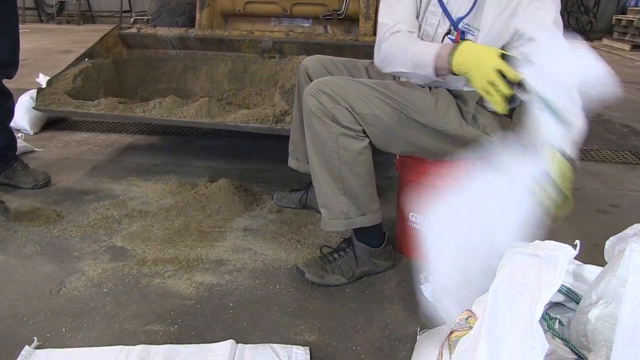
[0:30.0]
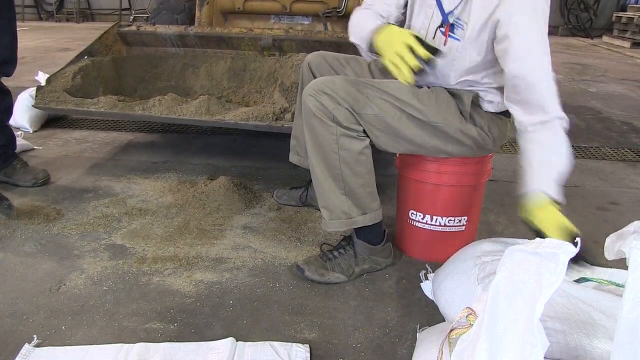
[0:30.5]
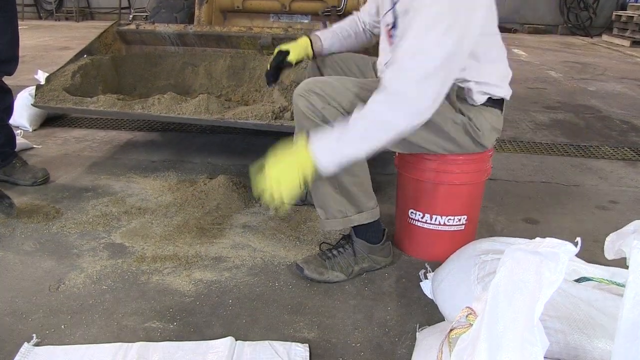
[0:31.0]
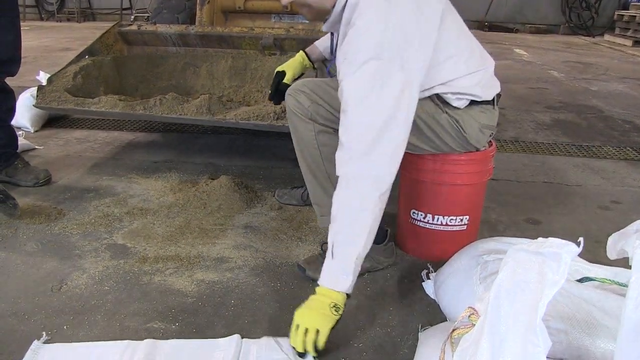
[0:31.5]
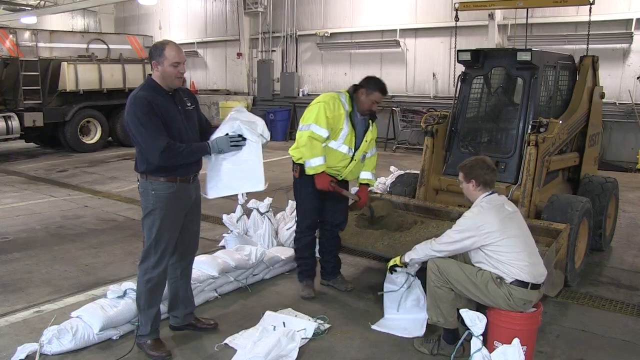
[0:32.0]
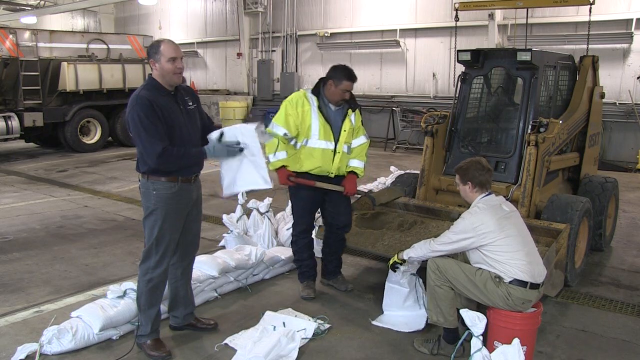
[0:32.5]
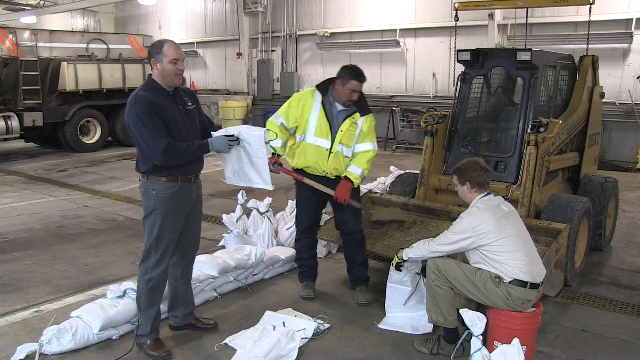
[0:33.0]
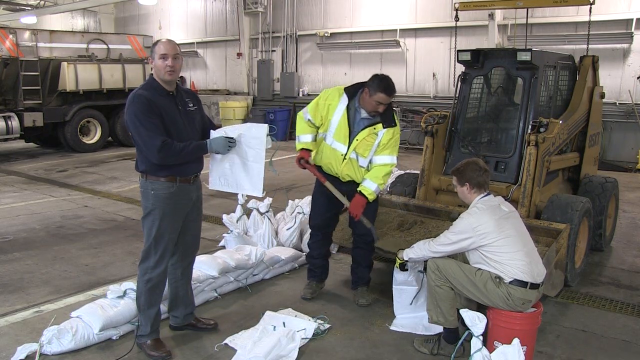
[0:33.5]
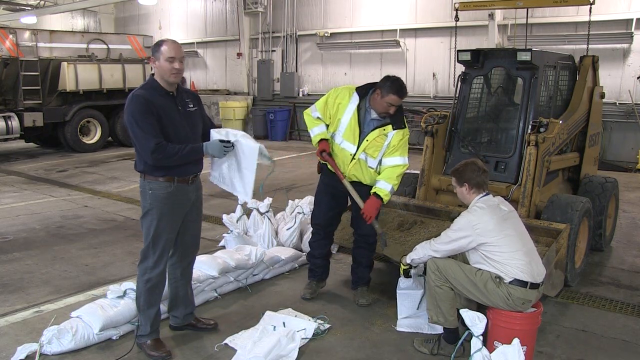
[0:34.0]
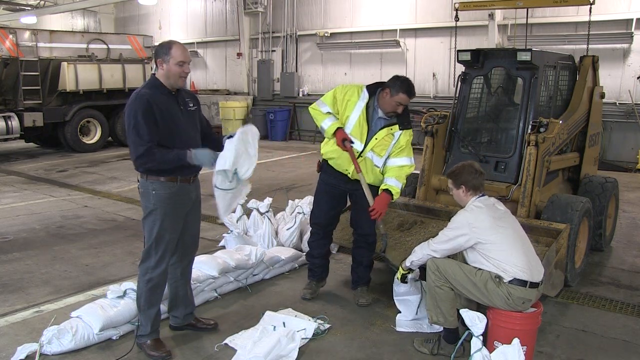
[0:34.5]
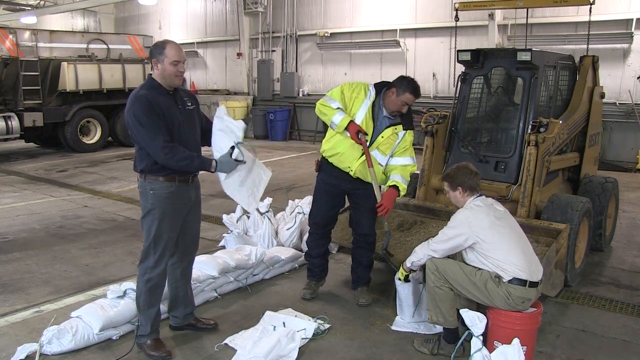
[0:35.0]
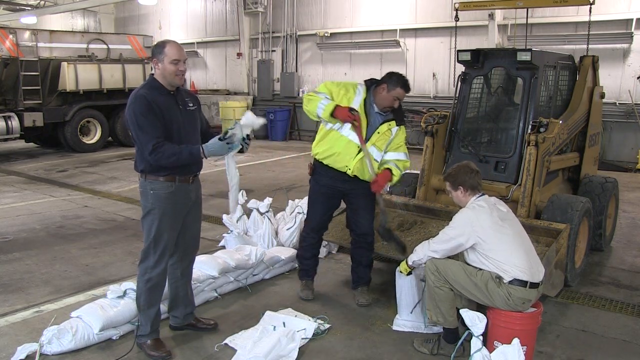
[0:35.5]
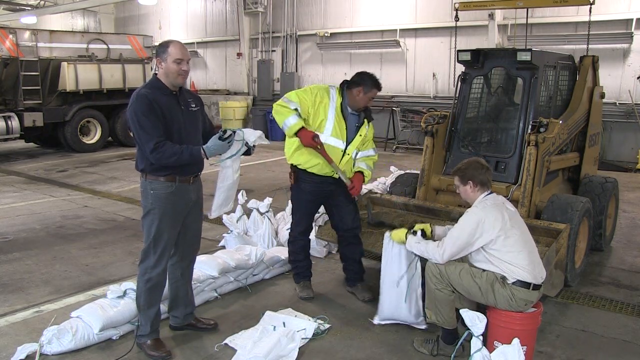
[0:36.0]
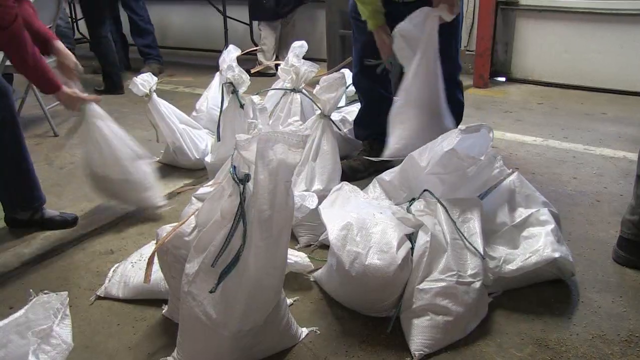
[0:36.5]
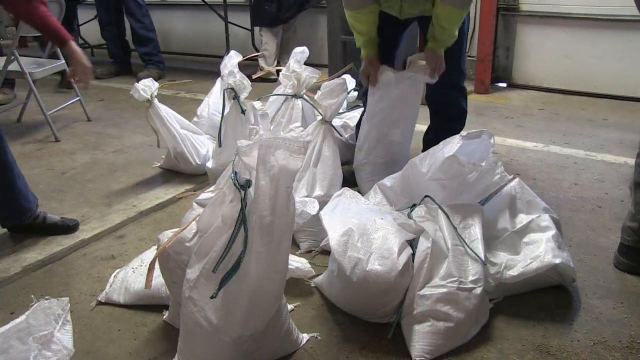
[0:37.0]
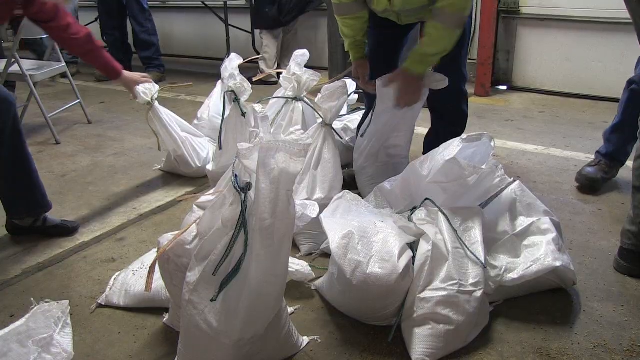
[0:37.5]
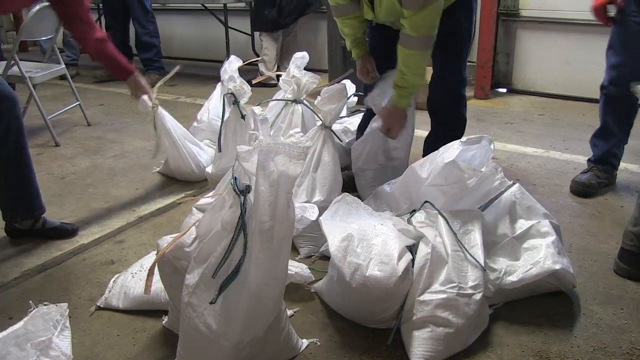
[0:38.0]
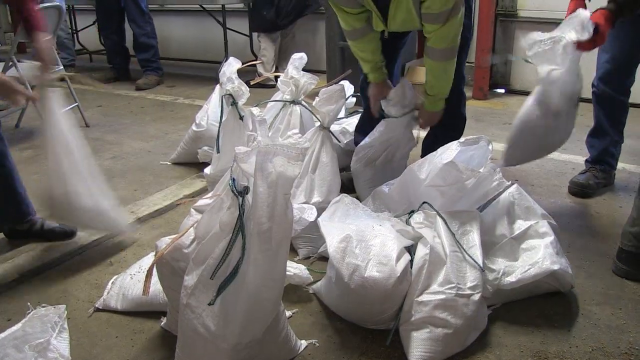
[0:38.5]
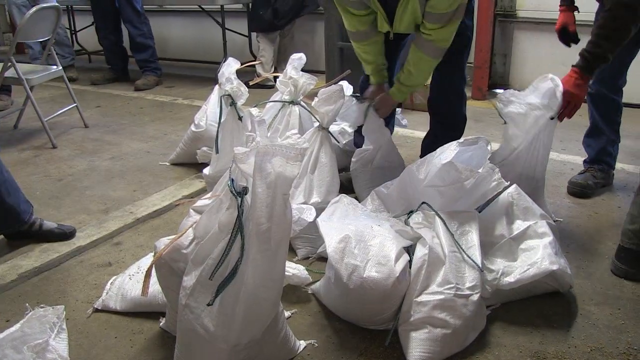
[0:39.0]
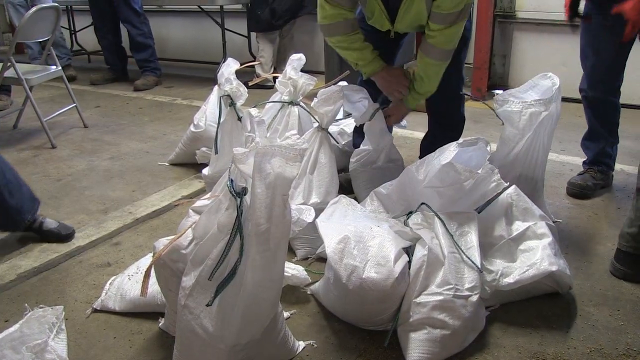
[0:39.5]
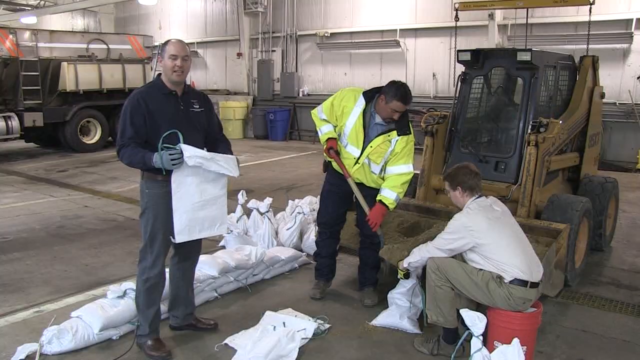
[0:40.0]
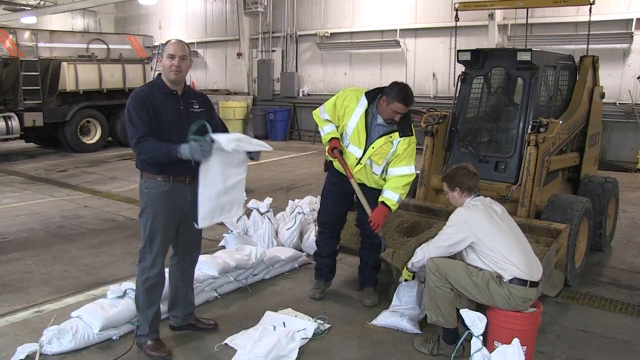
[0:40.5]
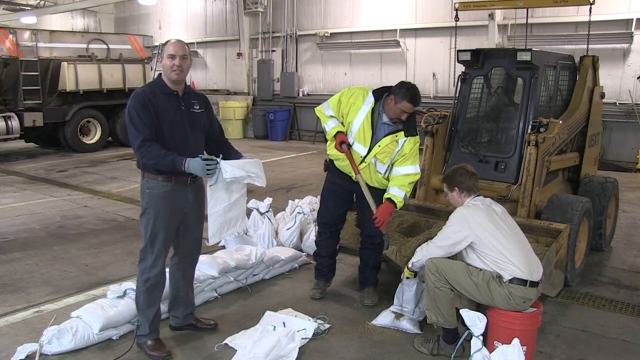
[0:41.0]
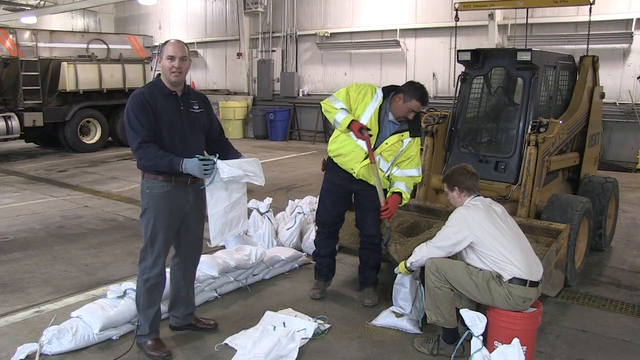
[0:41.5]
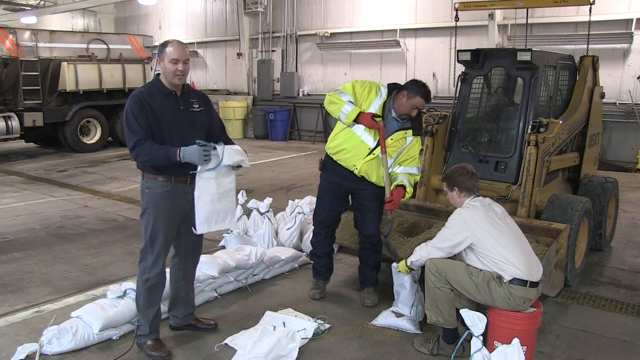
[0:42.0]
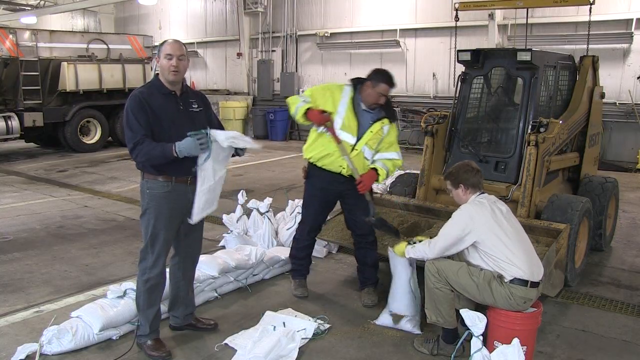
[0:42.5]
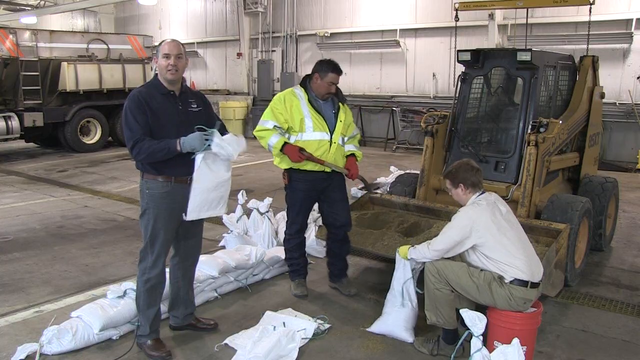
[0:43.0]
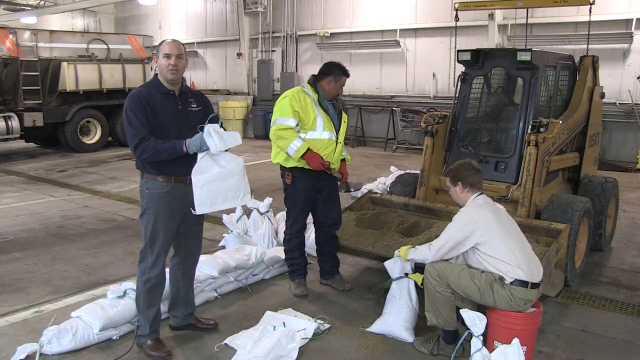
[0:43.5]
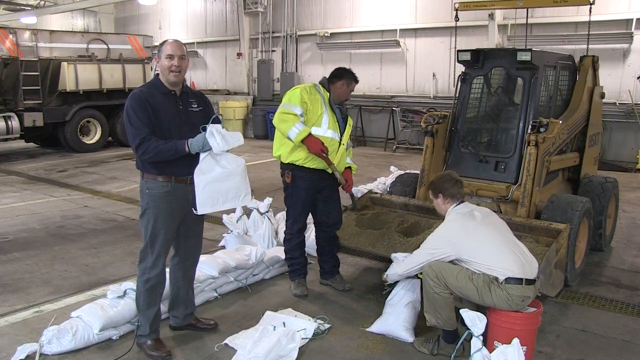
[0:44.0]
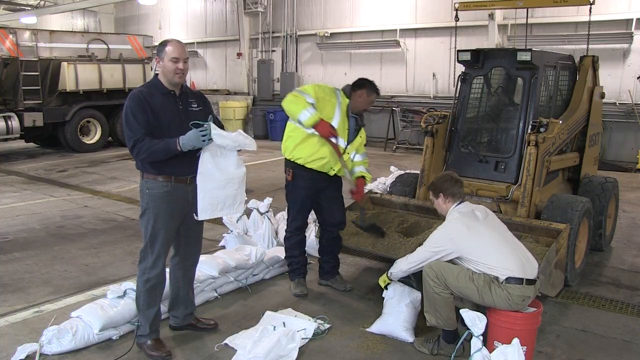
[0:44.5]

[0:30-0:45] The speaker and his co-workers remain in the warehouse, and the speaker continues speaking. The video briefly switches to co-workers in the warehouse with multiple sandbags filled two-thirds of the way, zipping them up with green ties before moving them off to the side, off-screen. The workers' faces are not visible, only their hands, torsos, and legs.